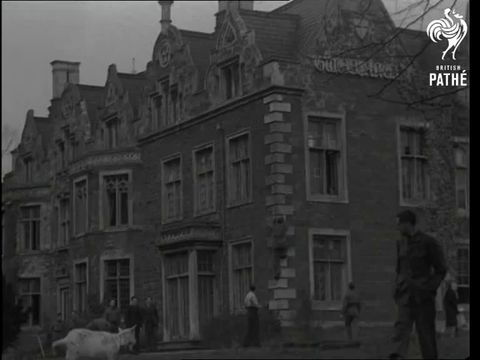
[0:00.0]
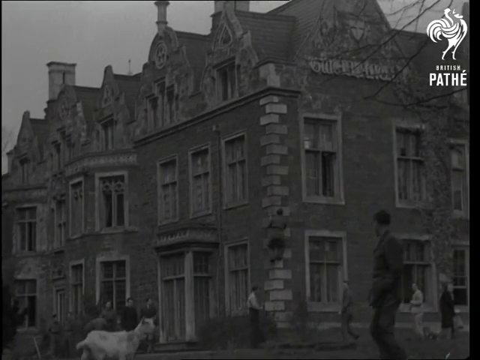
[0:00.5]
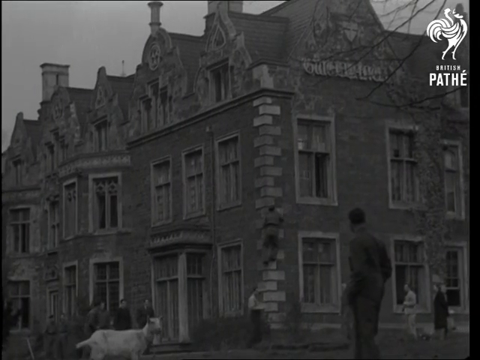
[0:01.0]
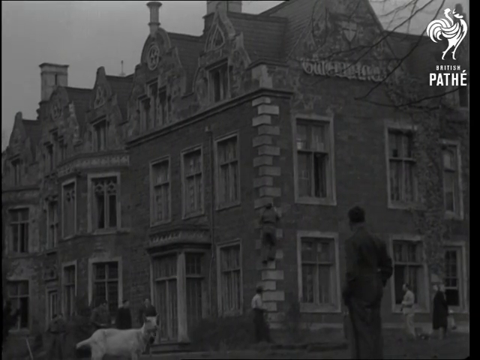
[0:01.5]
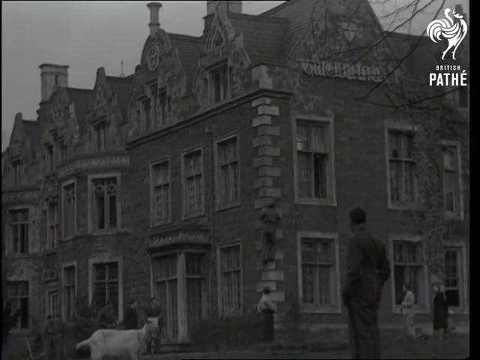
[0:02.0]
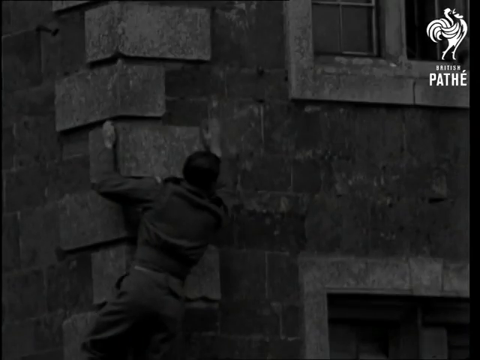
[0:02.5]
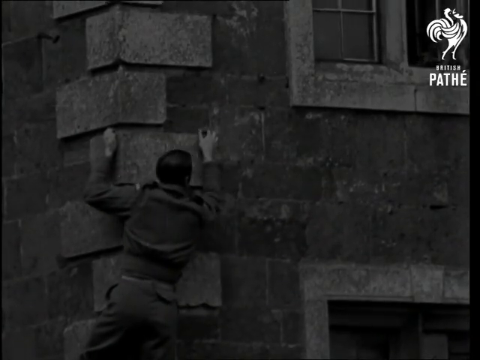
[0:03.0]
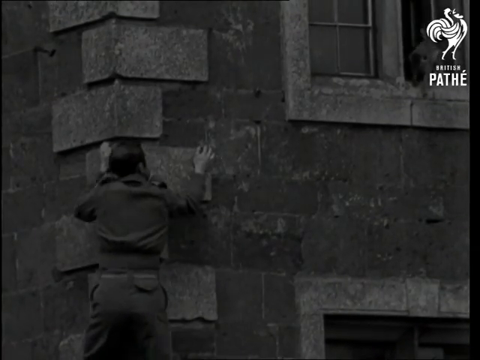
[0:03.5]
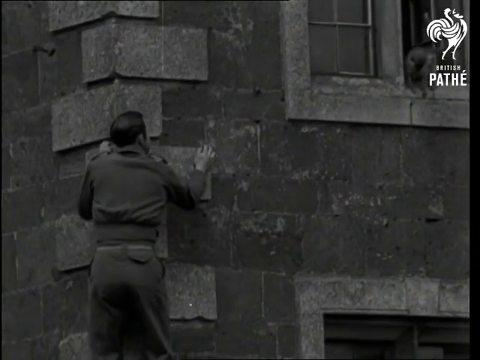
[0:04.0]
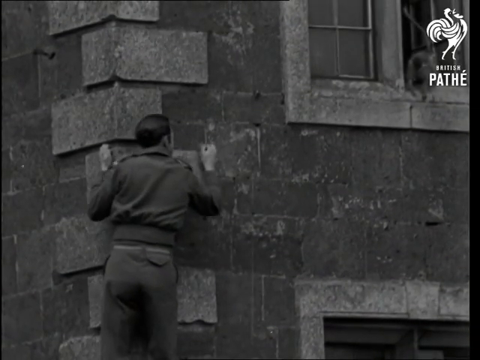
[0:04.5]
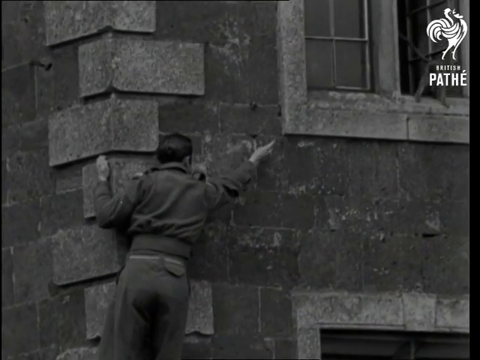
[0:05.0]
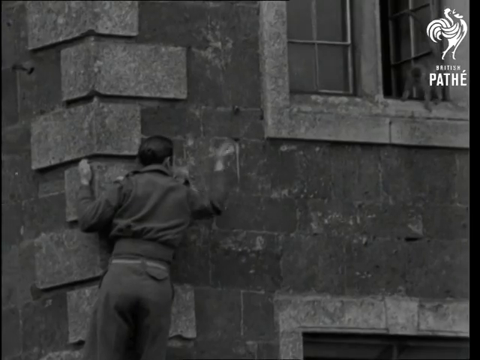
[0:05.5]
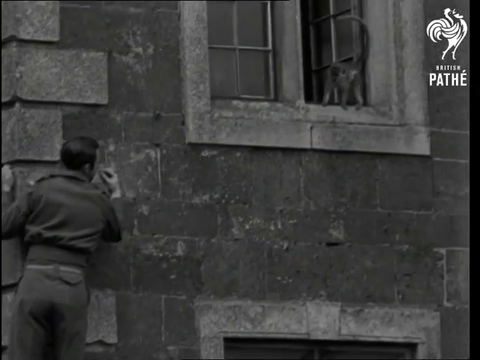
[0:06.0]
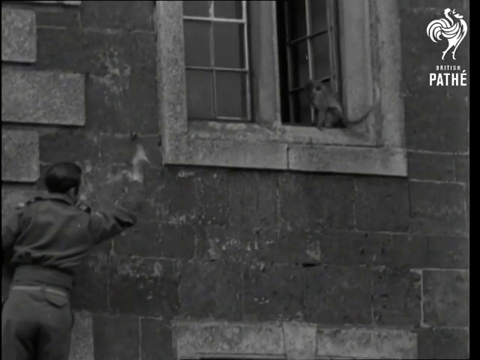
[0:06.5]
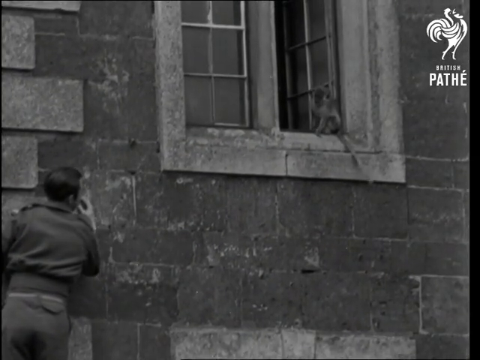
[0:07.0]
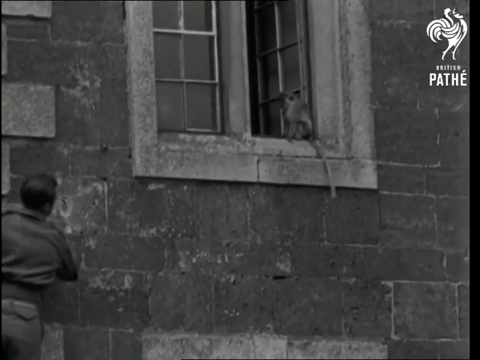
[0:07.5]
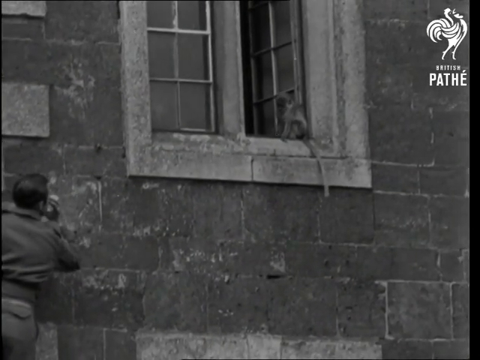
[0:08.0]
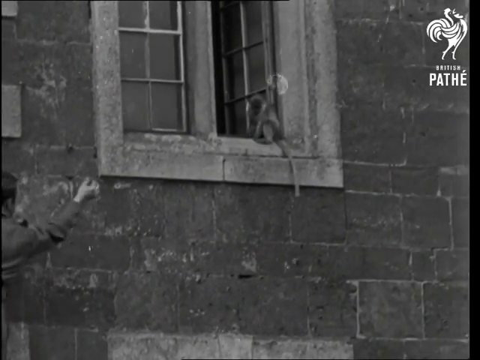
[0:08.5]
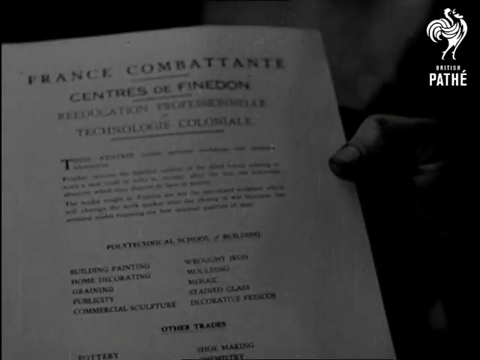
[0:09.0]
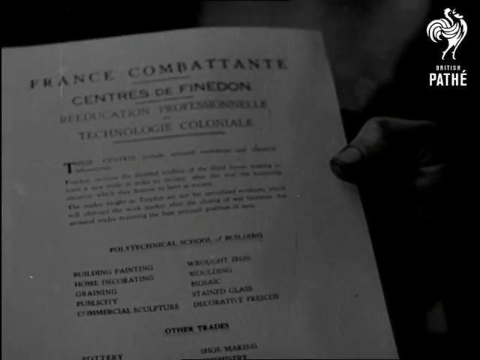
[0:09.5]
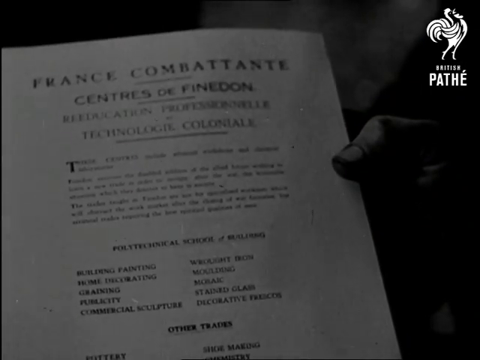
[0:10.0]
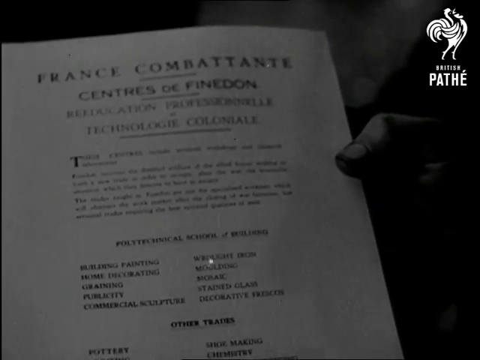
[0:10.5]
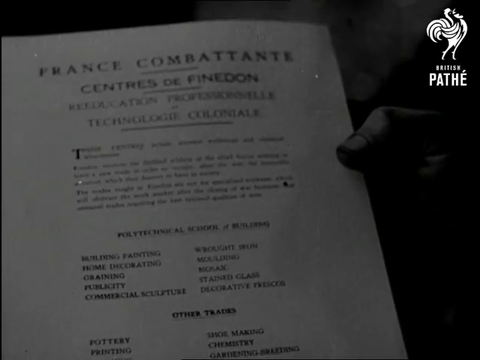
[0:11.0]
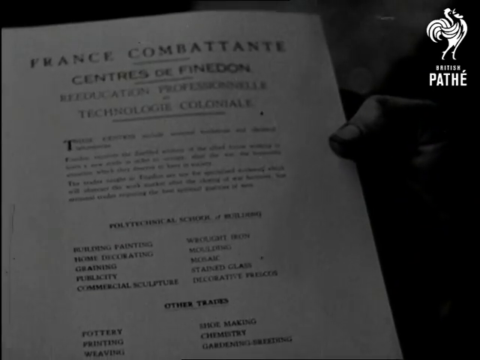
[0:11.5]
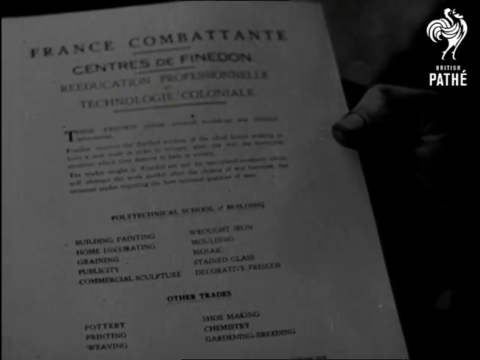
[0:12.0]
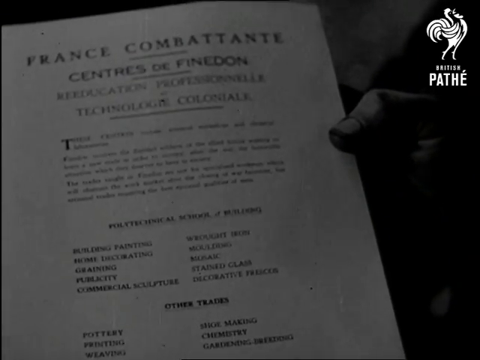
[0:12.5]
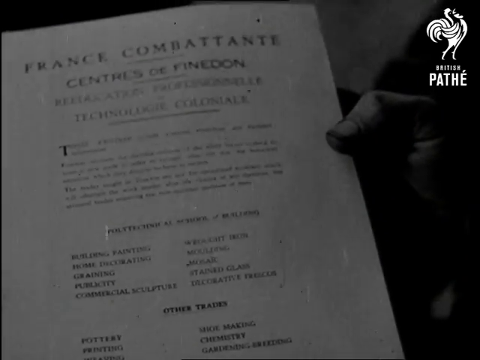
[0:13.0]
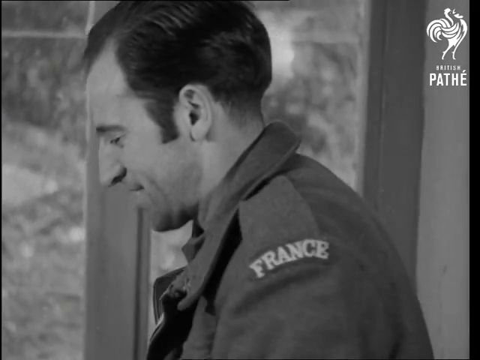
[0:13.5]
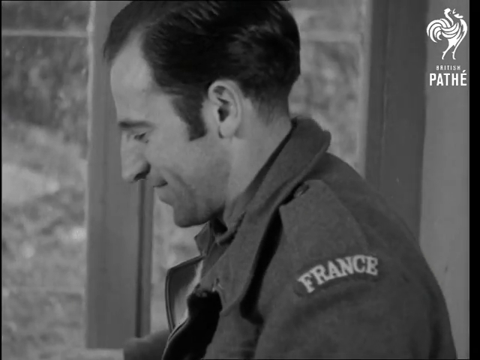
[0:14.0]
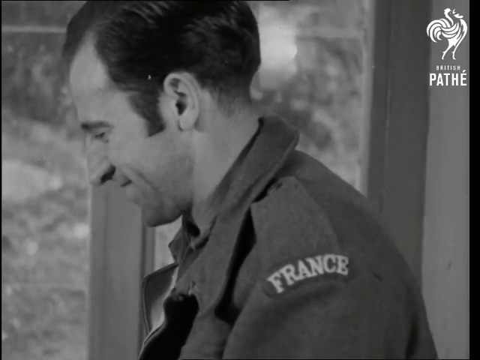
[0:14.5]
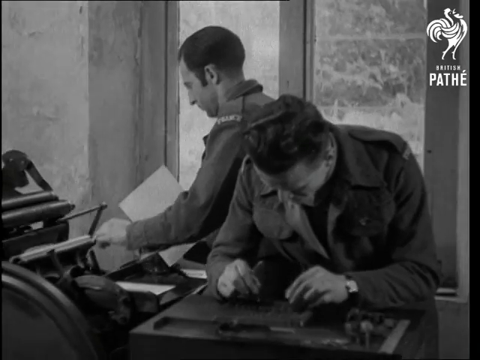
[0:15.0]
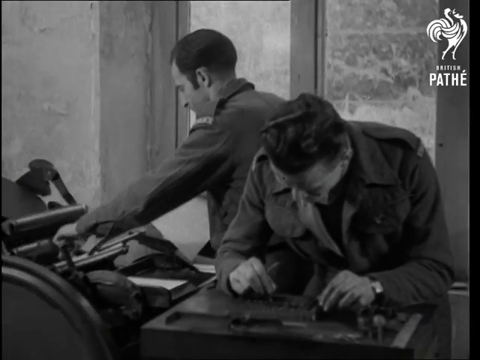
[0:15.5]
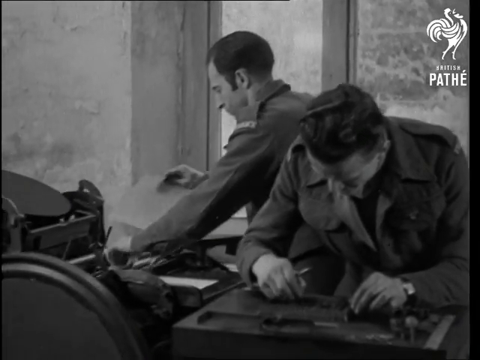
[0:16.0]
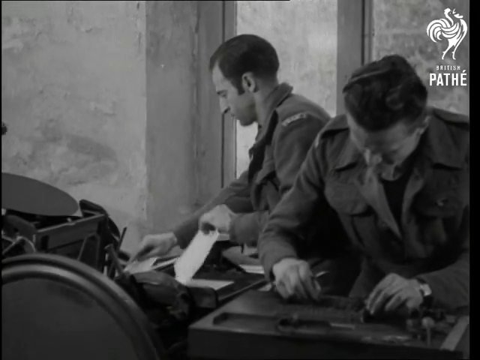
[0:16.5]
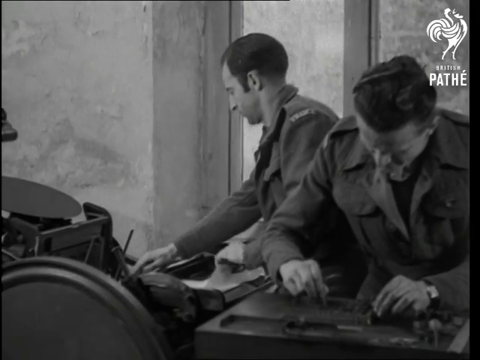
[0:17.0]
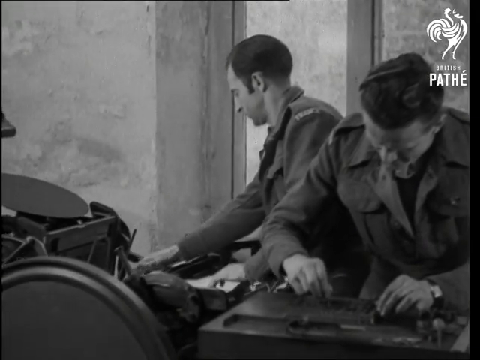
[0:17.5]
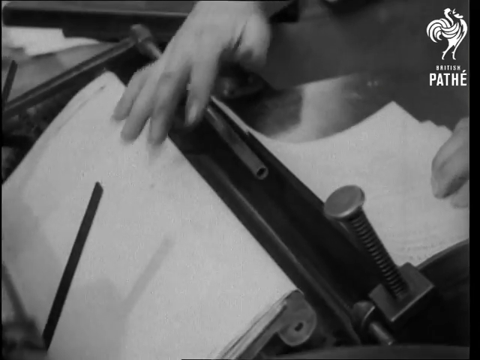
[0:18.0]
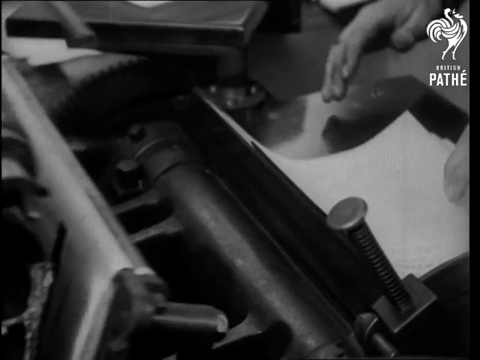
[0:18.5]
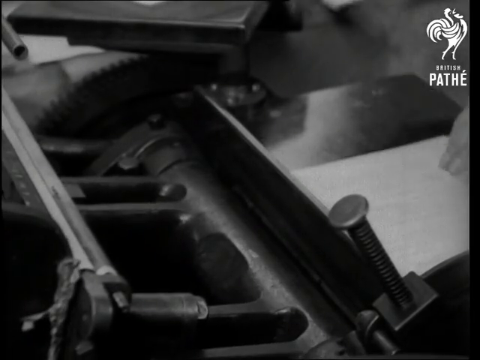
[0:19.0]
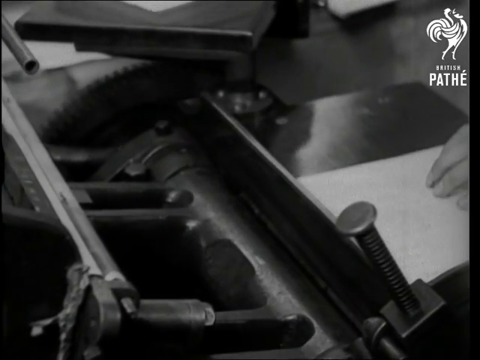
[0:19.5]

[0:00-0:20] An old black-and-white scene of a village opens the video, with a large stone building front and center. The camera zooms in on the building, where a man is scaling a corner wall on the exterior. He points toward a window, and as the camera pans over to the open window, a monkey is sitting on the window sill. The man continues to point at the monkey. Next, a piece of white paper with both large and small writing on it is shown, held by someone's thumb. Two men then work in a print shop; one has "France" written on his coat. One of them uses an old printer press while the other appears to be writing something. The printer press is shown at work, zoomed in so the hands operating the press and moving paper within it are visible. Everything is in black and white, and the setting appears to be at least 60 to 80 years ago.